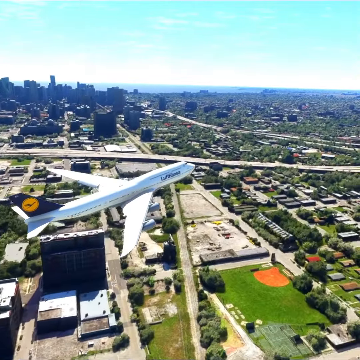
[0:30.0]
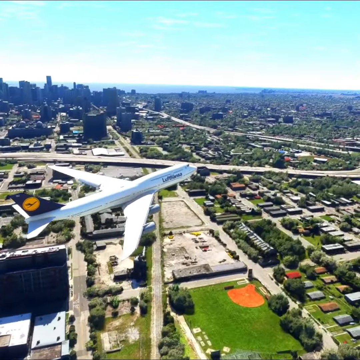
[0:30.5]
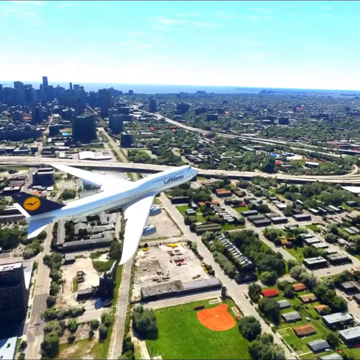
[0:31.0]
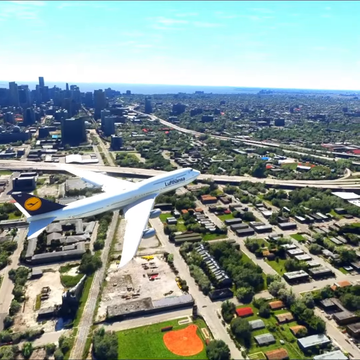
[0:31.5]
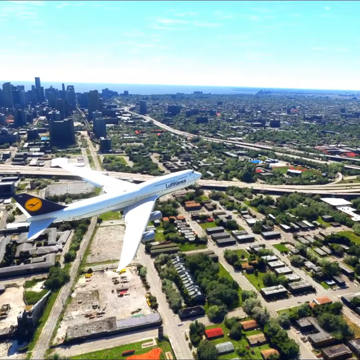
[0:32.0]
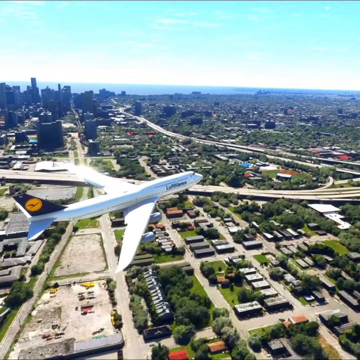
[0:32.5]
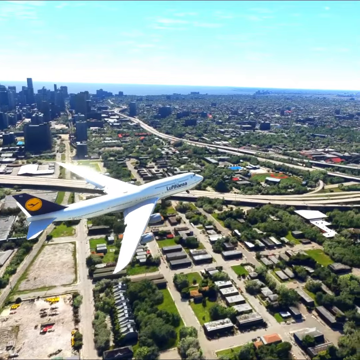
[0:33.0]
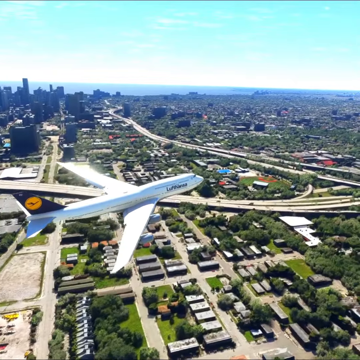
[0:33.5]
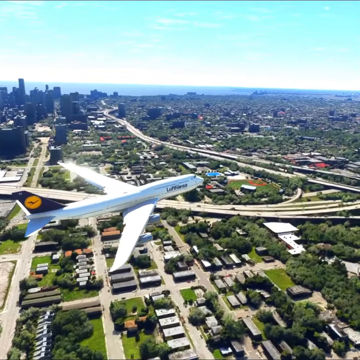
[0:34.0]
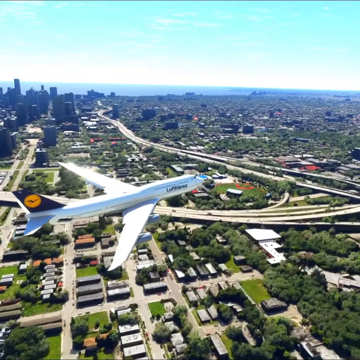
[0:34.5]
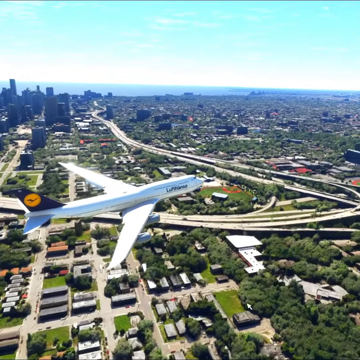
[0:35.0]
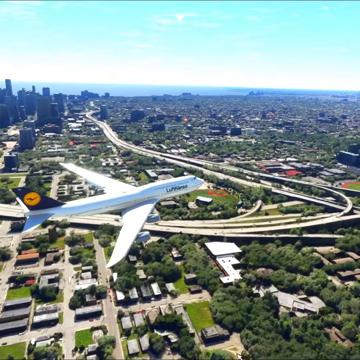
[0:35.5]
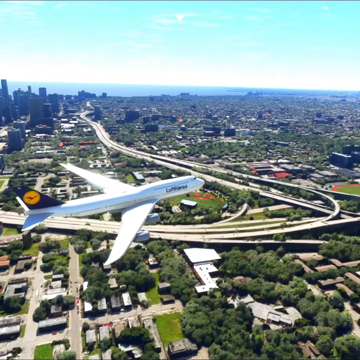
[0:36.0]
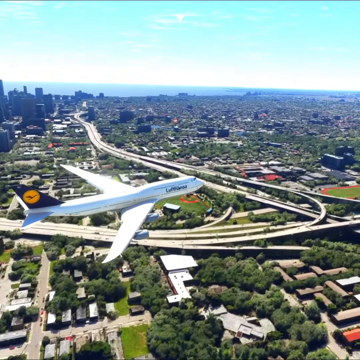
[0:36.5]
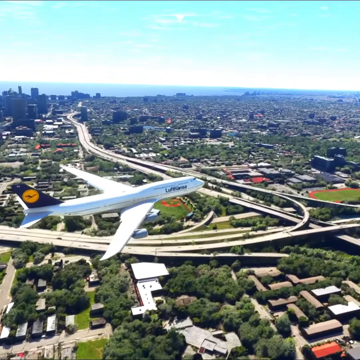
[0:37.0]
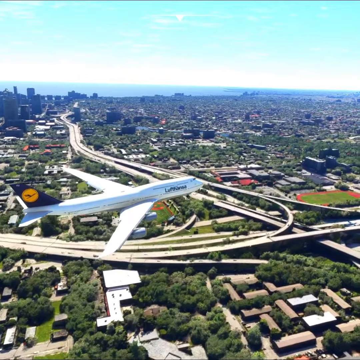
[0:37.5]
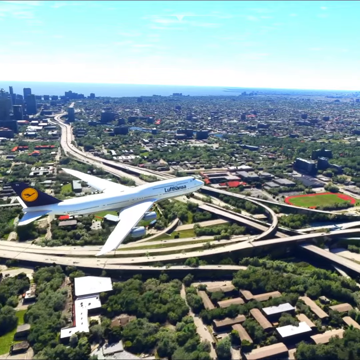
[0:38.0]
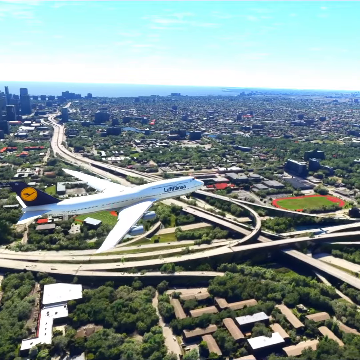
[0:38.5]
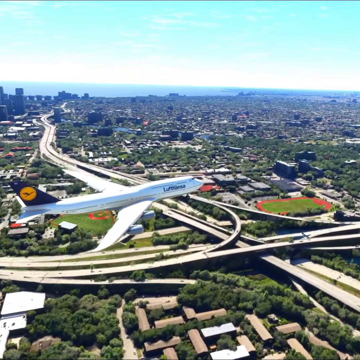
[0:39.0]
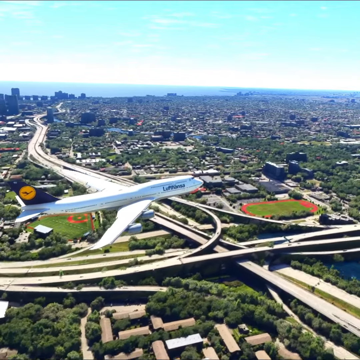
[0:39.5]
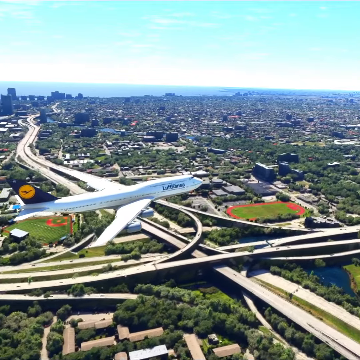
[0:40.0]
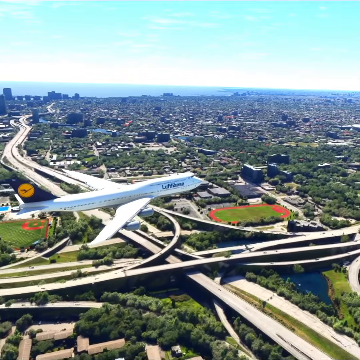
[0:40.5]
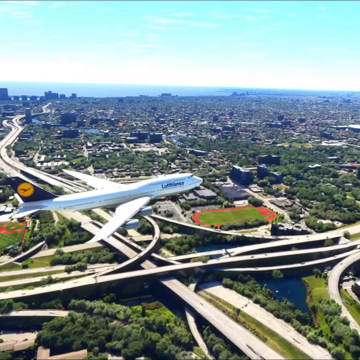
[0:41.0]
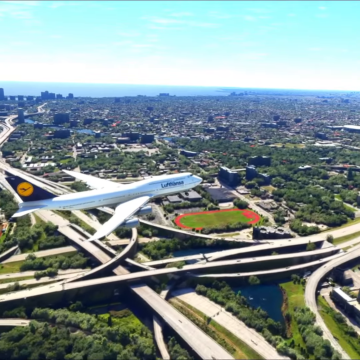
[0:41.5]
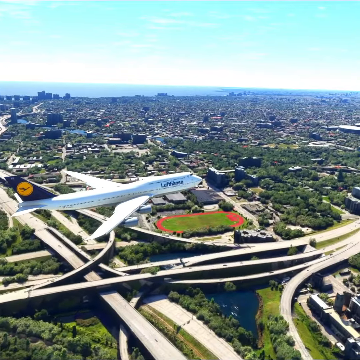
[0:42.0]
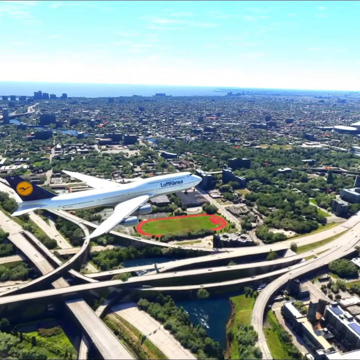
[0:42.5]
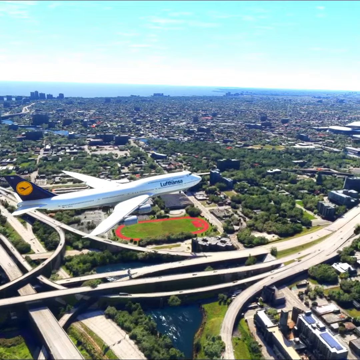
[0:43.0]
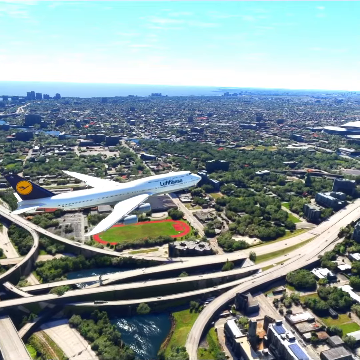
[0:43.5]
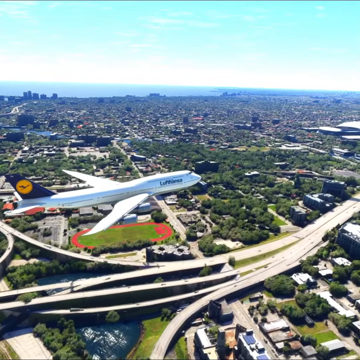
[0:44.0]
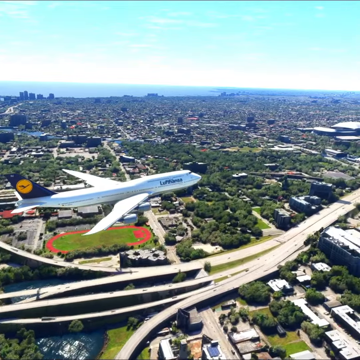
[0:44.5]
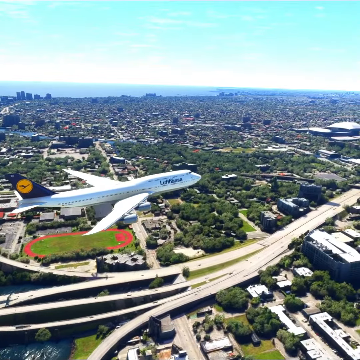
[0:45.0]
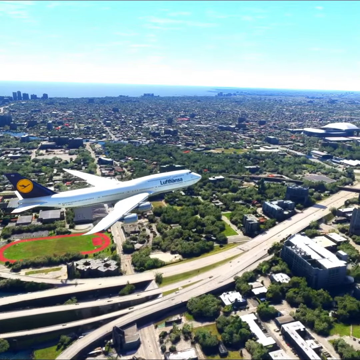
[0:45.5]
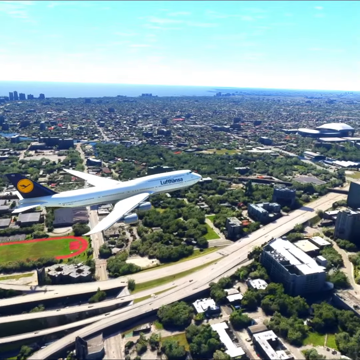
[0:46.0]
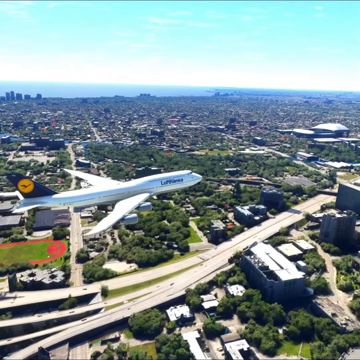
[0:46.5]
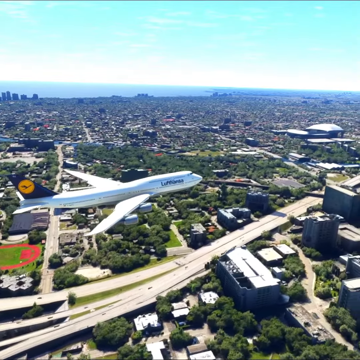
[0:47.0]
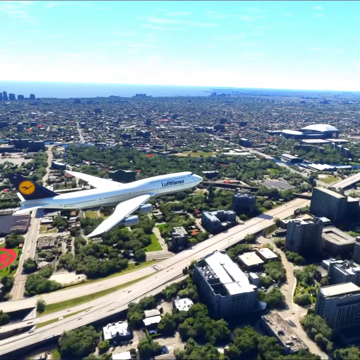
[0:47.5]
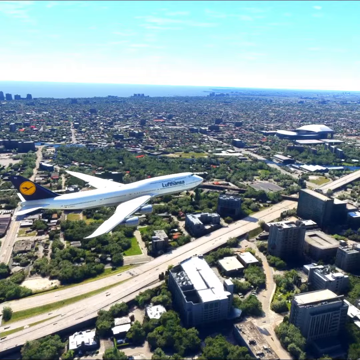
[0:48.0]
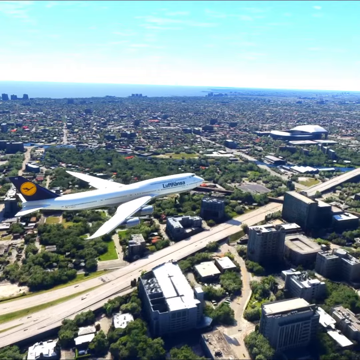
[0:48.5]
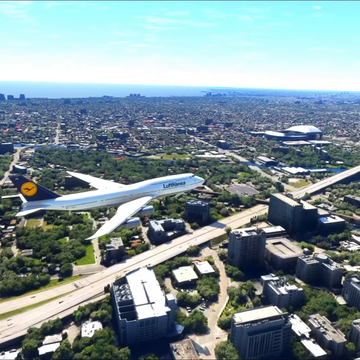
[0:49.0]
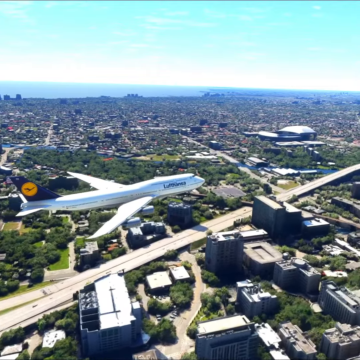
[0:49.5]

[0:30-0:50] A large white passenger aircraft travels over a very populated city area. Below, many freeways are intertwined, with vehicles going back and forth on them. Houses, other buildings, many streets and green areas are visible, along with a ball field. There are many neighborhoods with green lawns and many trees. As the plane keeps traveling over the populated area, water is visible in the background behind the city, with blue sky above it; the water is a darker blue and the sky a lighter blue. More neighborhoods pass below, then some construction sites, and then another sports field comes into view as the plane continues traveling toward the right.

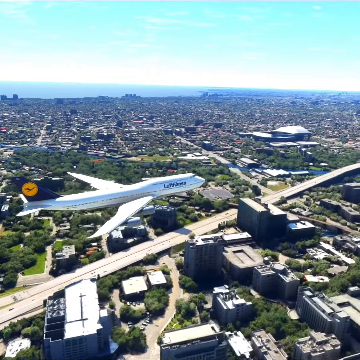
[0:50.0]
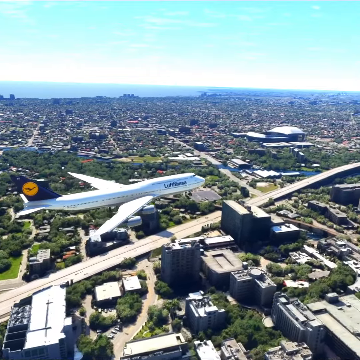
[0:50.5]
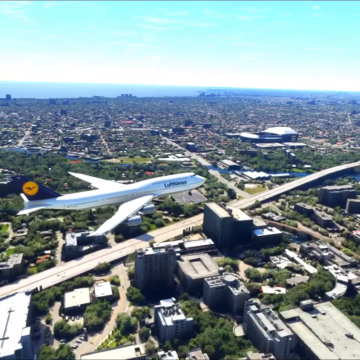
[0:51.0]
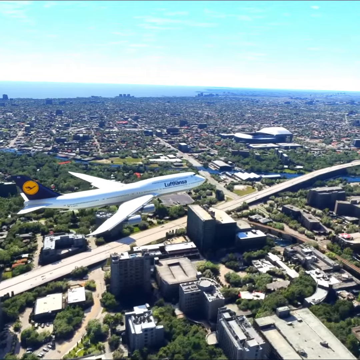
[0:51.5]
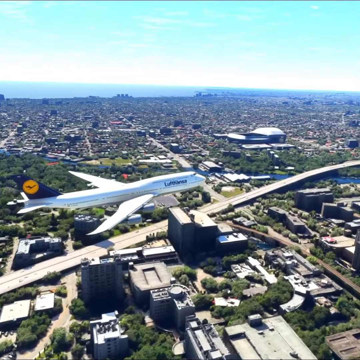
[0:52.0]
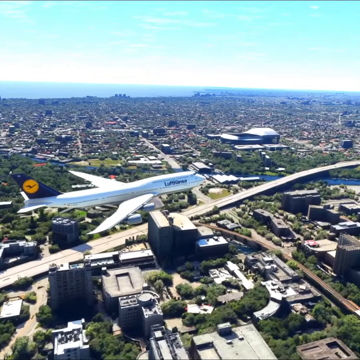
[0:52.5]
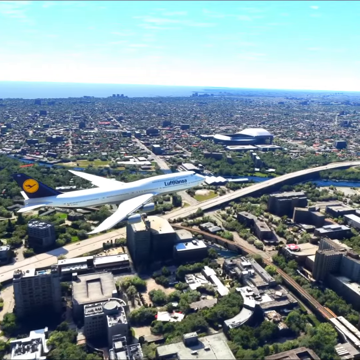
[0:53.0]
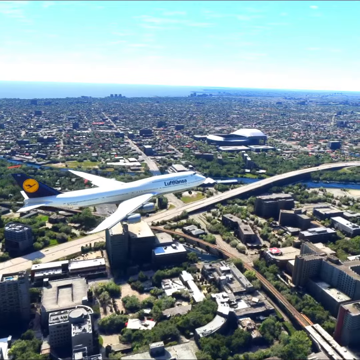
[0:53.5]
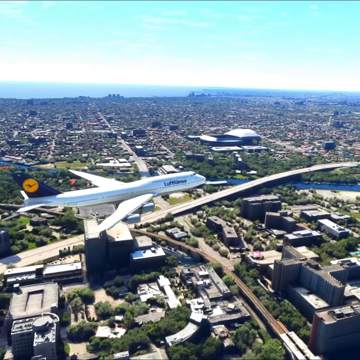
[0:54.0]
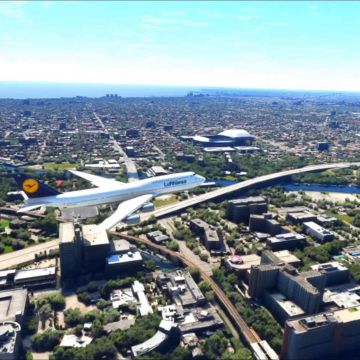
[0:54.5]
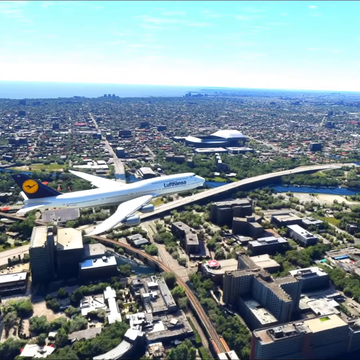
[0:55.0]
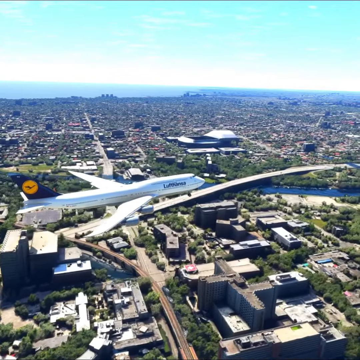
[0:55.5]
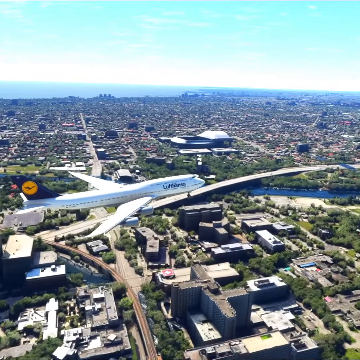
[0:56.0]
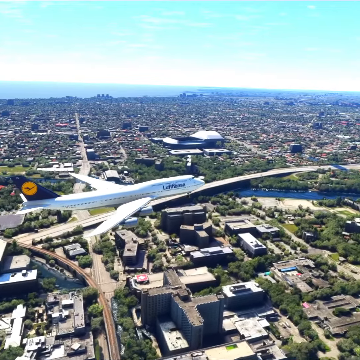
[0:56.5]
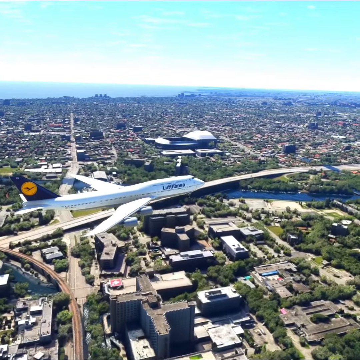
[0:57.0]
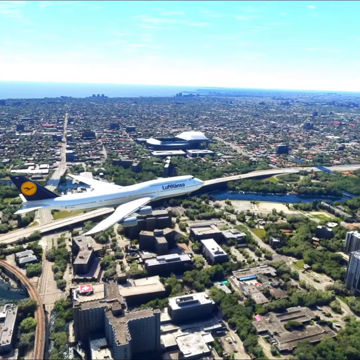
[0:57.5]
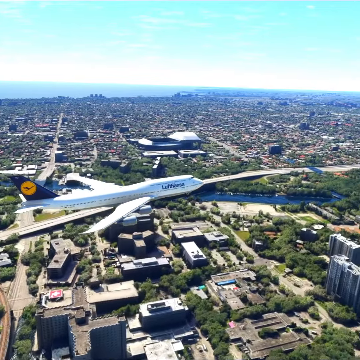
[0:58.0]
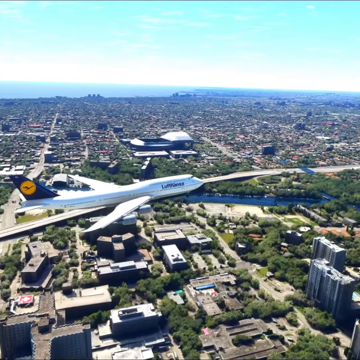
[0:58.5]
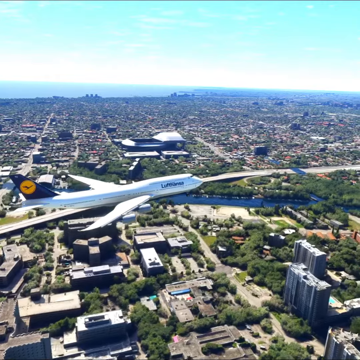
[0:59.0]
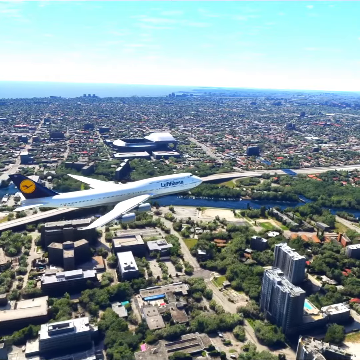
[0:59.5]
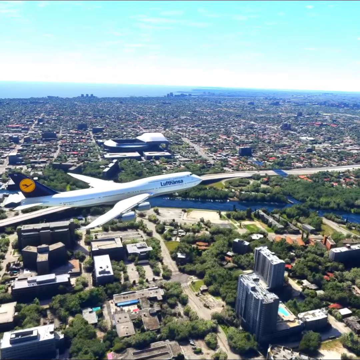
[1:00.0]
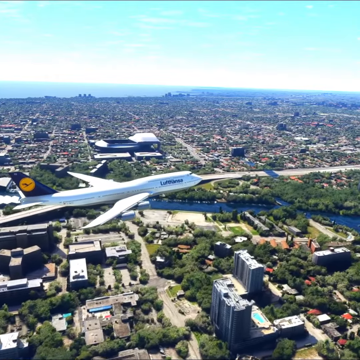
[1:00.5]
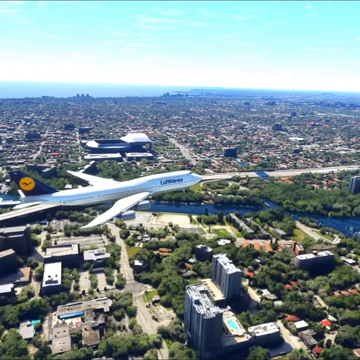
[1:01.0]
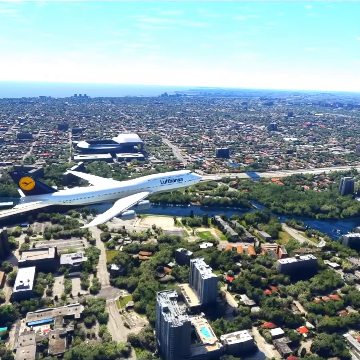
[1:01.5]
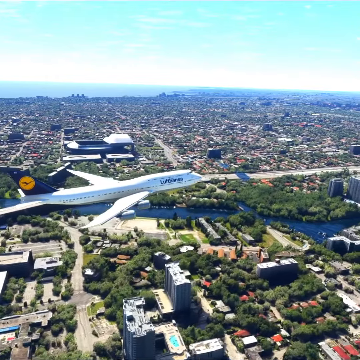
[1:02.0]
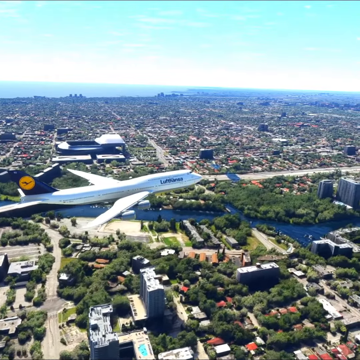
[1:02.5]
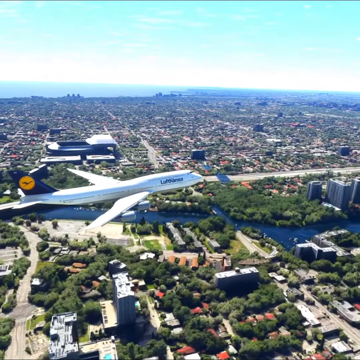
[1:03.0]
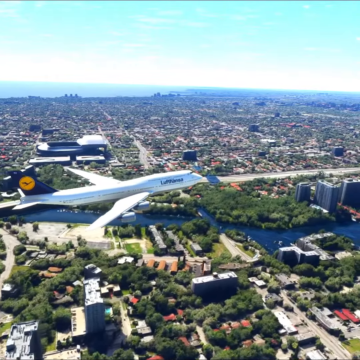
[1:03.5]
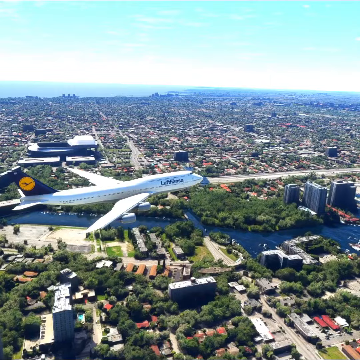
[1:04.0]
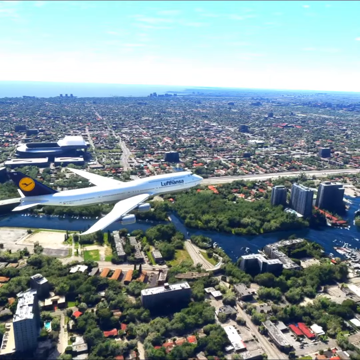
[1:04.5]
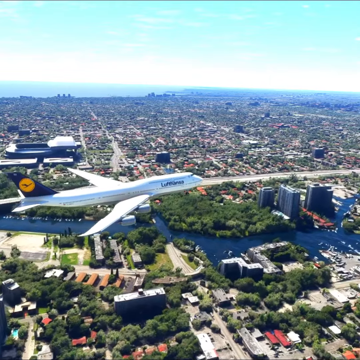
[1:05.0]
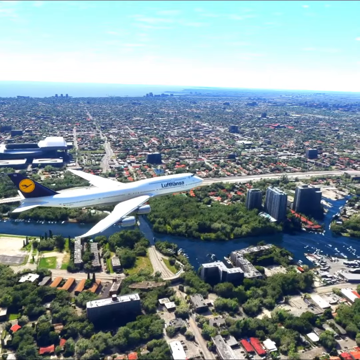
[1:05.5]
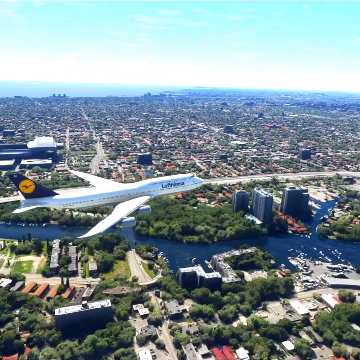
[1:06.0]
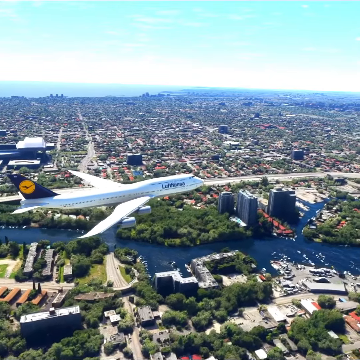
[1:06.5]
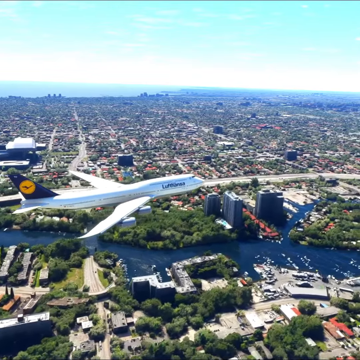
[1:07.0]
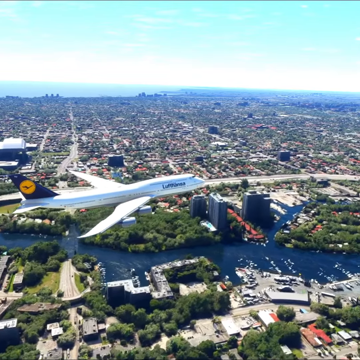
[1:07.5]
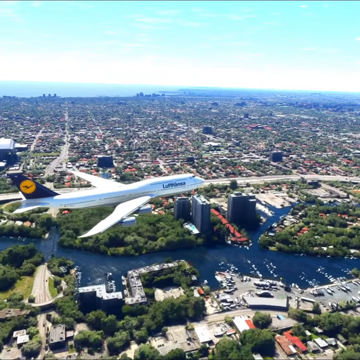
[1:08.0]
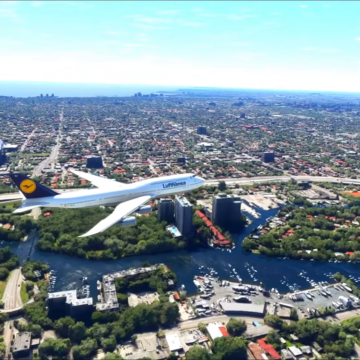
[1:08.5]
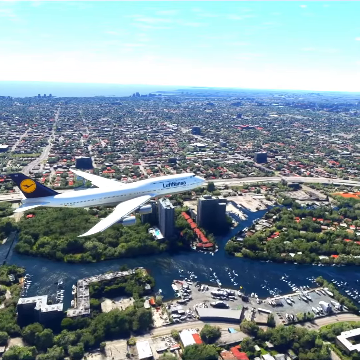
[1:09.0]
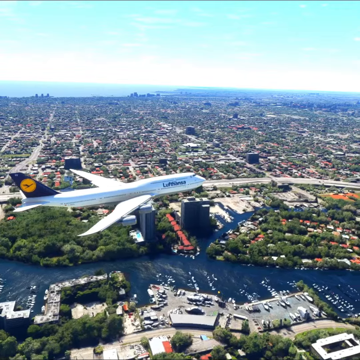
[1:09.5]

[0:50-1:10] A large white passenger airplane travels low over a very populated area. Below it are many roads with vehicles traveling on them, both freeways and side streets, and many buildings, including taller buildings and neighborhoods of houses and streets. In the upper part of the image, water shows as dark blue in the background, with a light blue sky with wispy clouds above it. As the plane continues over the populated area, a river appears below, very dark blue, with some boats in a marina. There are a lot of green trees on one side of the river, and a few tall buildings are also located there.